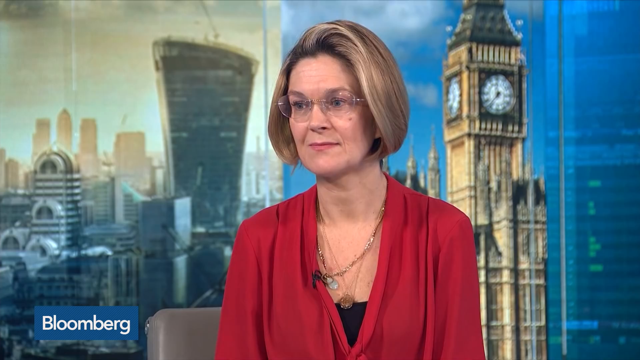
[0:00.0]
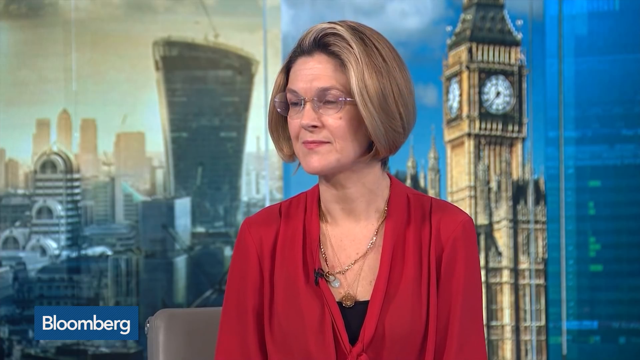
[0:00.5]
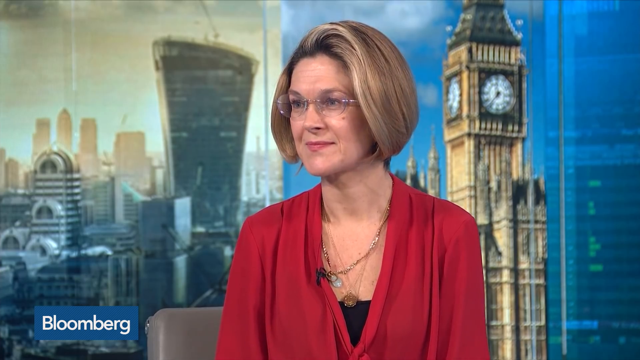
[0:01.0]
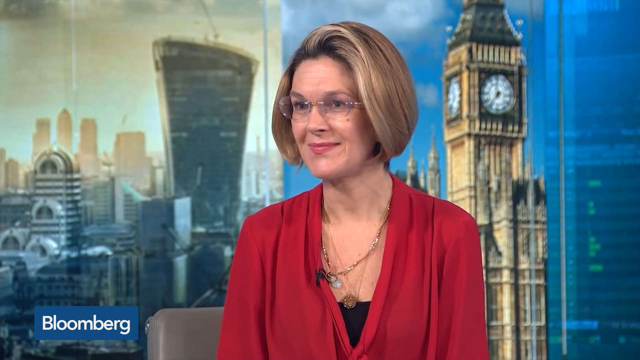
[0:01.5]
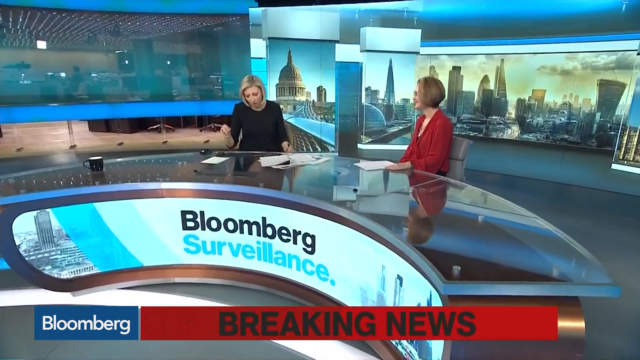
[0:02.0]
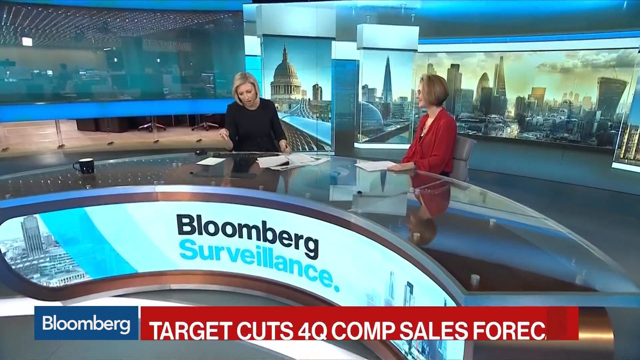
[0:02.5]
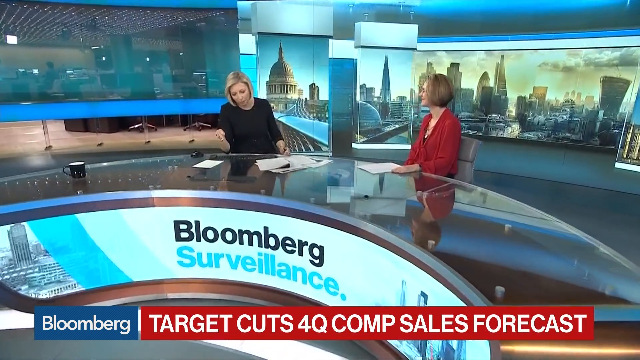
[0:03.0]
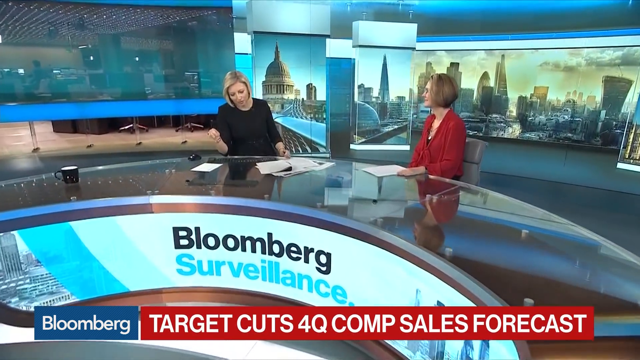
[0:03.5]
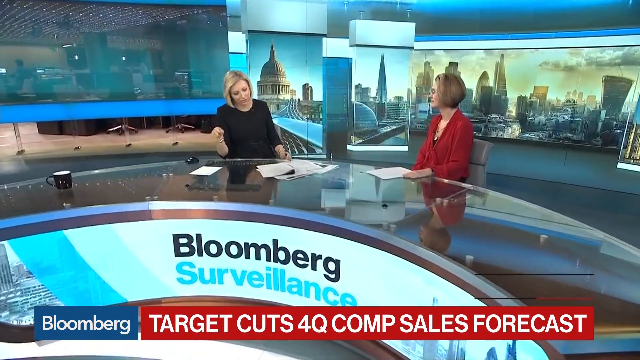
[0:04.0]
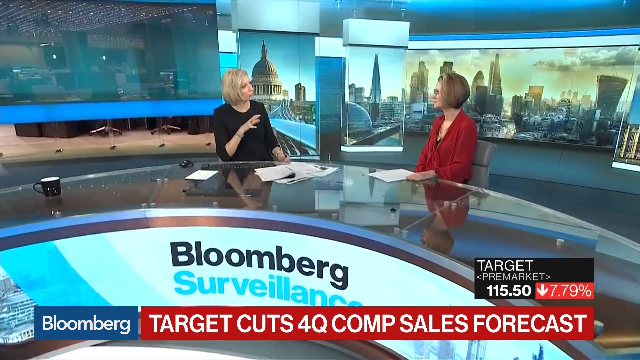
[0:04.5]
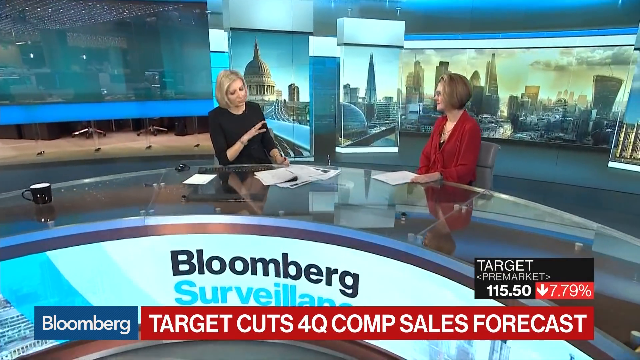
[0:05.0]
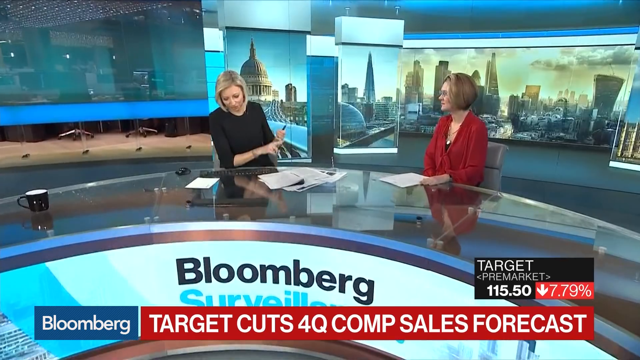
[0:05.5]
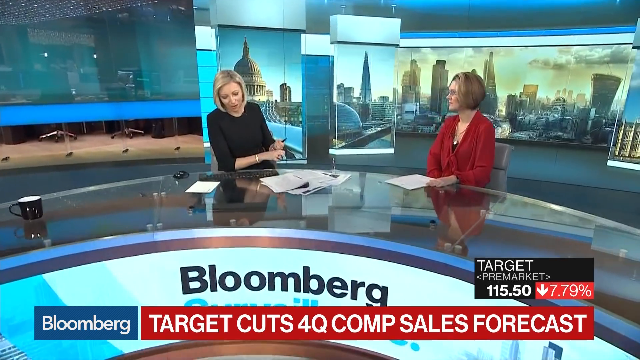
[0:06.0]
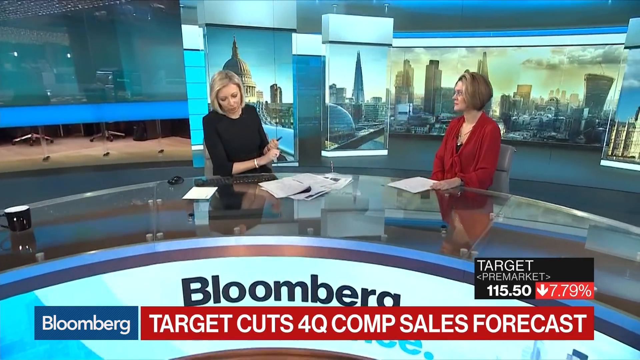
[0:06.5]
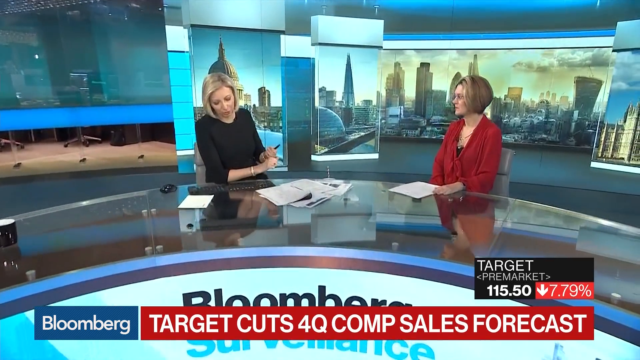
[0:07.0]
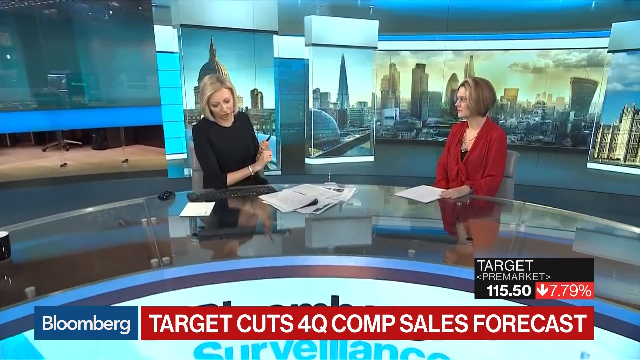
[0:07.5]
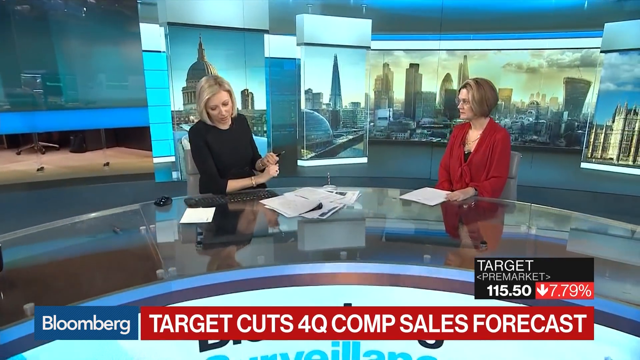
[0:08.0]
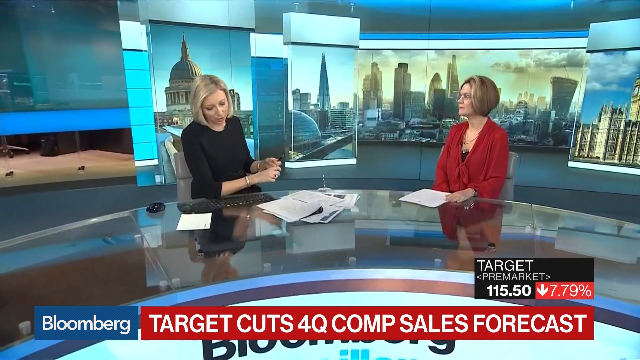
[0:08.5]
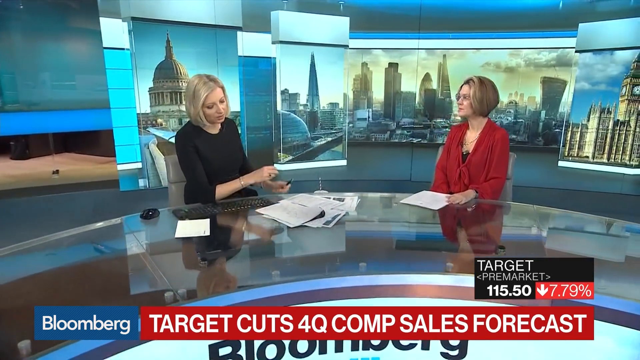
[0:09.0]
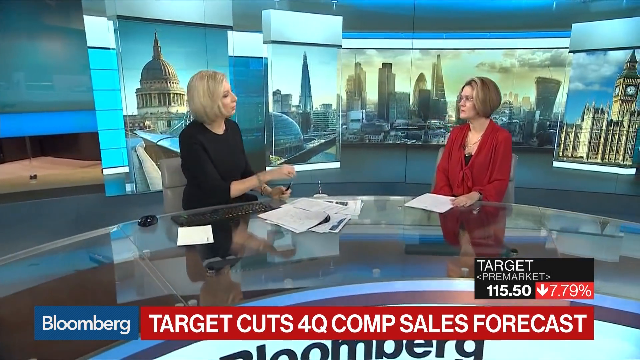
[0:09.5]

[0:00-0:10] A portion of a news segment shows a woman wearing glasses and a red blouse, with the Big Ben clock tower behind her. The camera zooms out to reveal that she is sitting in a news studio with a TV news host. They sit around a curved table, and on the front of the table it says "Bloomberg Surveillance". The host, in a black dress, looks down at the table and reads something to the woman in the red blouse, who smiles at her and nods her head repeatedly. The host then looks up from the papers she was reading and talks directly to the woman in the red blouse, who begins to speak as the segment ends.